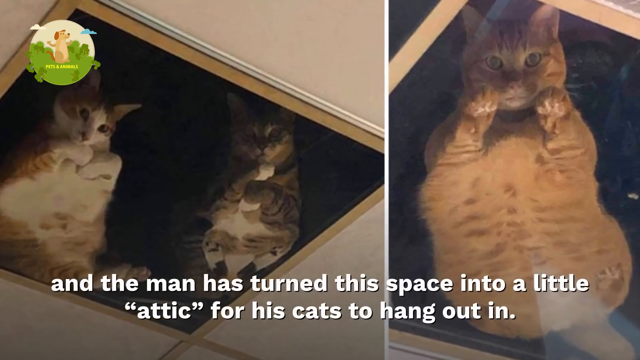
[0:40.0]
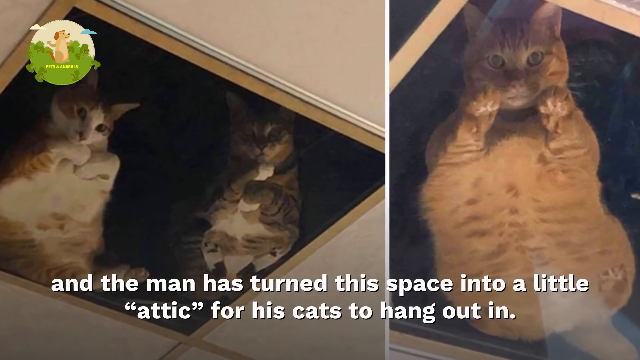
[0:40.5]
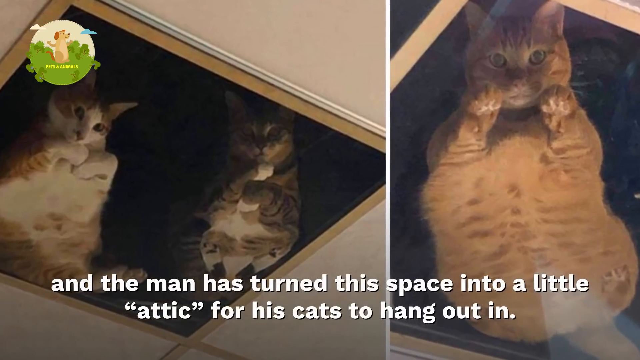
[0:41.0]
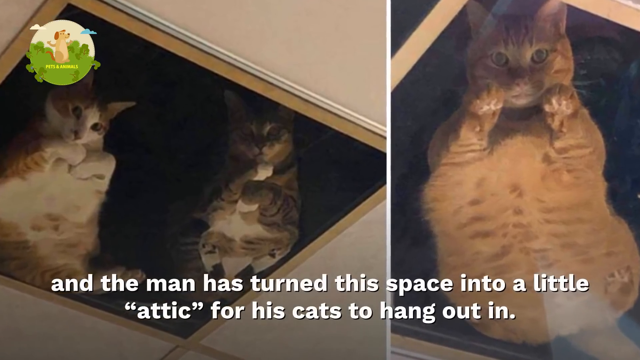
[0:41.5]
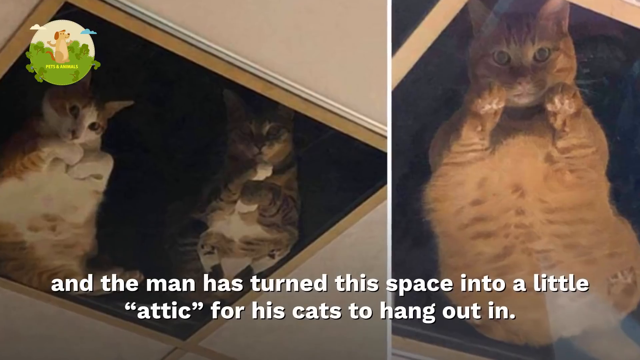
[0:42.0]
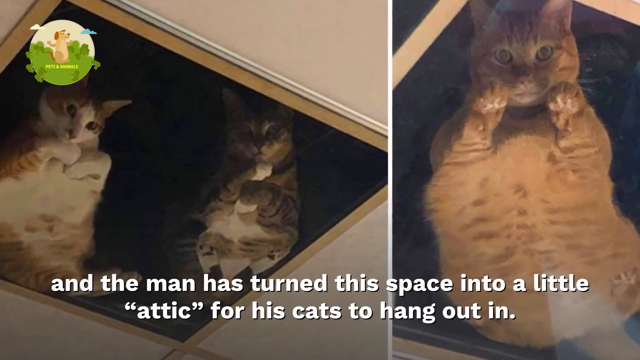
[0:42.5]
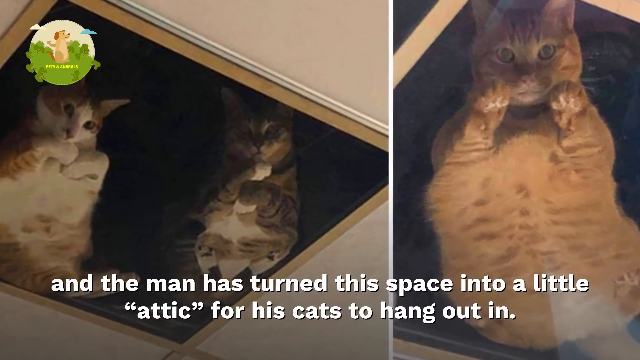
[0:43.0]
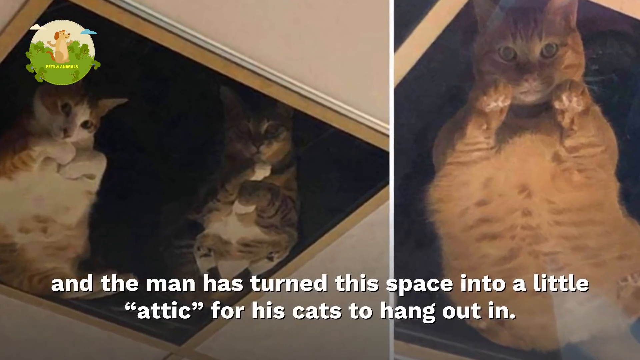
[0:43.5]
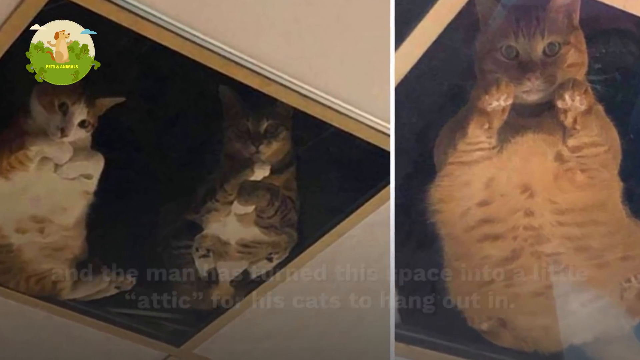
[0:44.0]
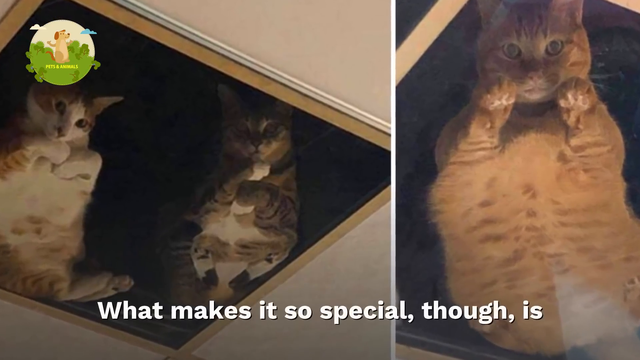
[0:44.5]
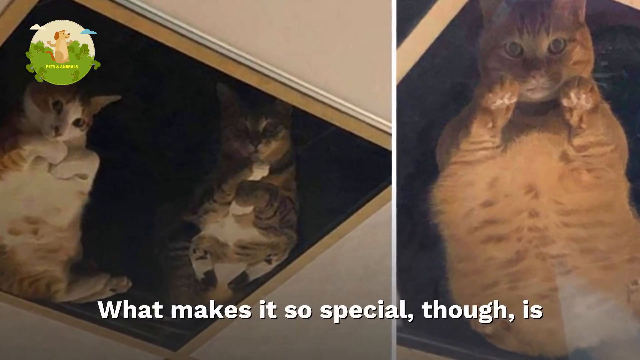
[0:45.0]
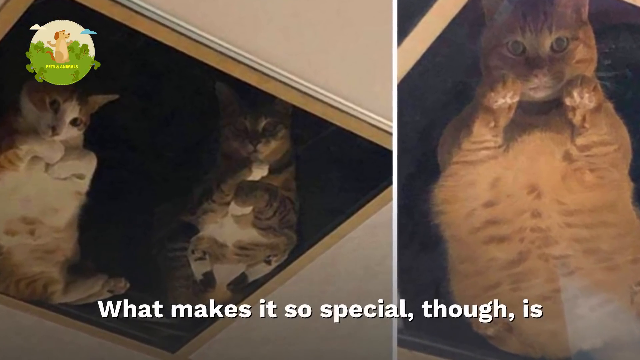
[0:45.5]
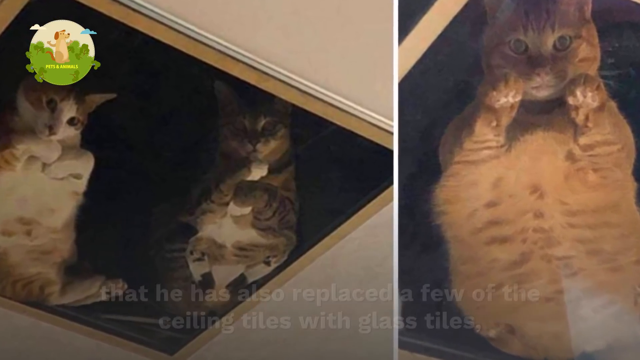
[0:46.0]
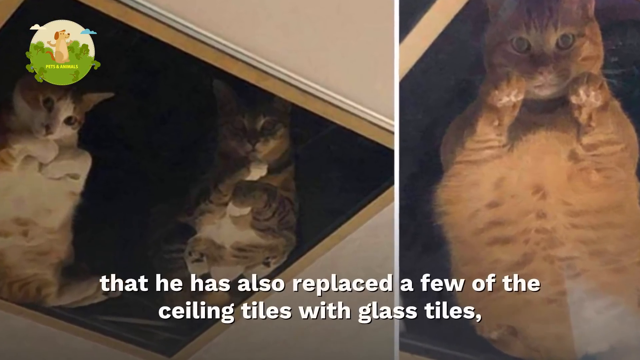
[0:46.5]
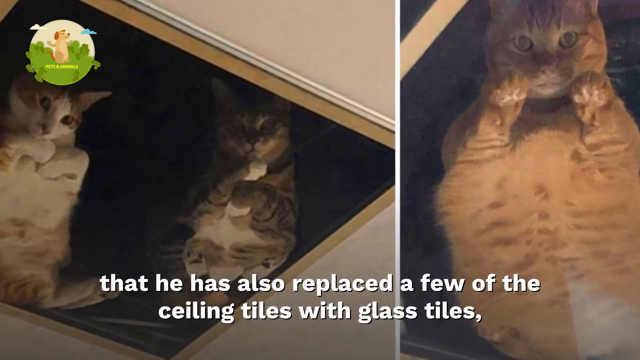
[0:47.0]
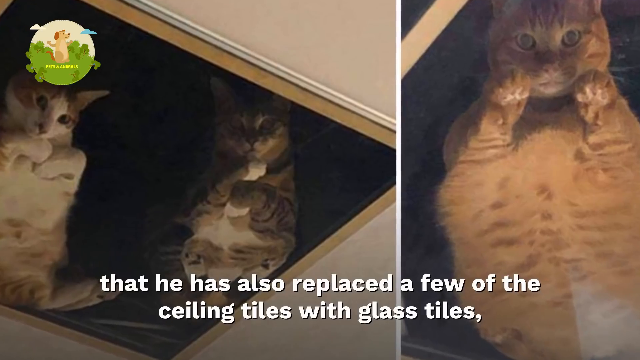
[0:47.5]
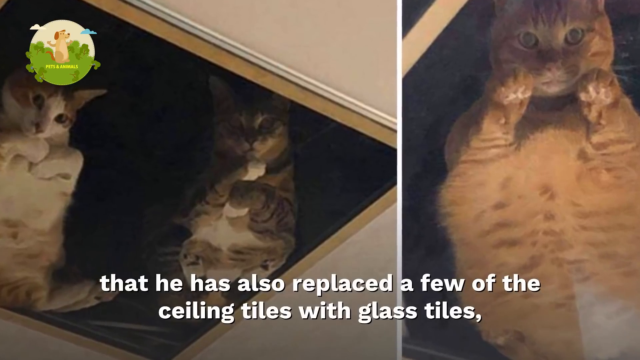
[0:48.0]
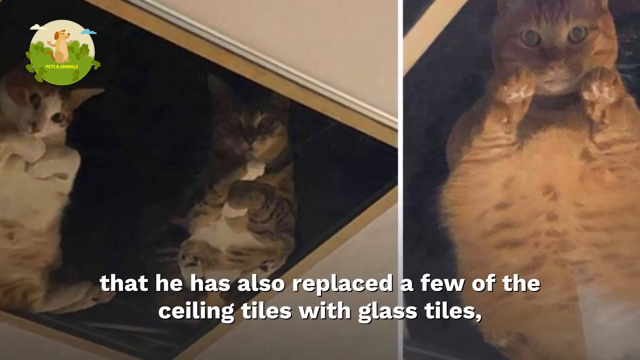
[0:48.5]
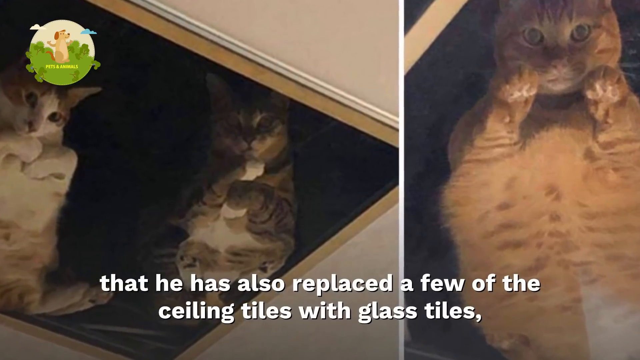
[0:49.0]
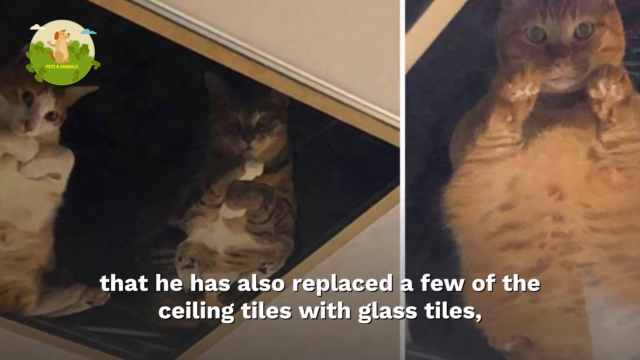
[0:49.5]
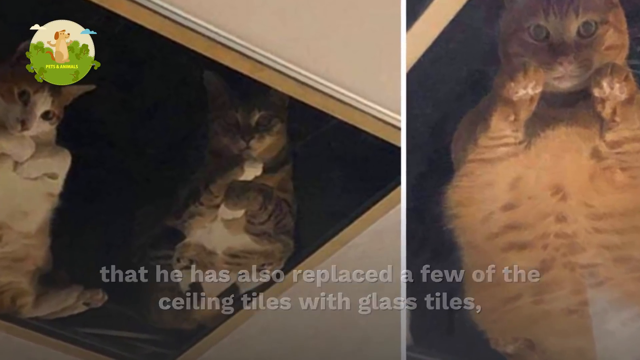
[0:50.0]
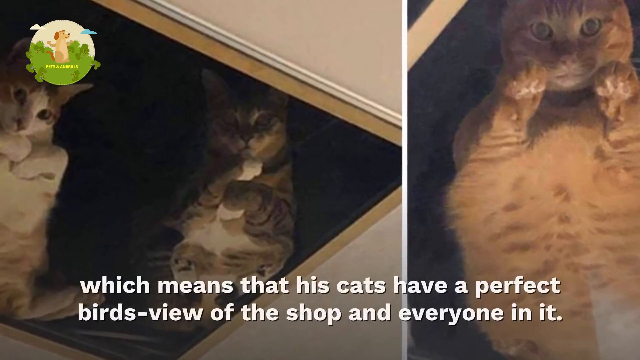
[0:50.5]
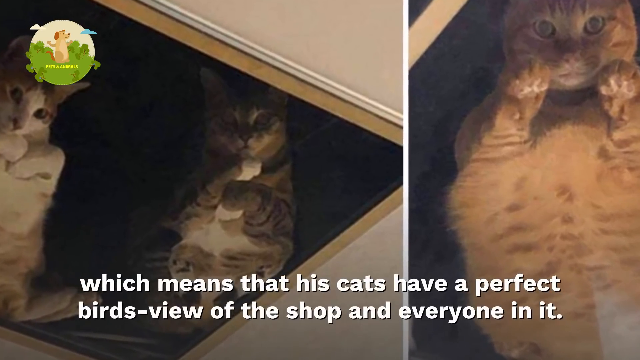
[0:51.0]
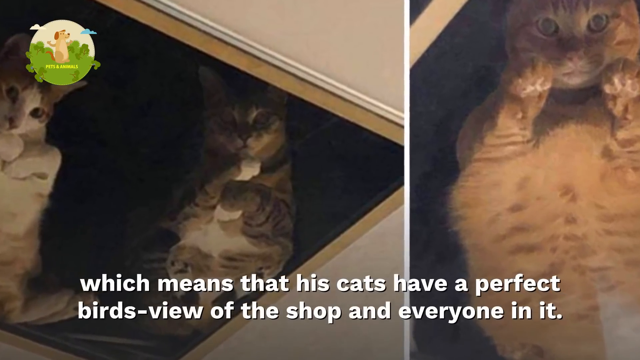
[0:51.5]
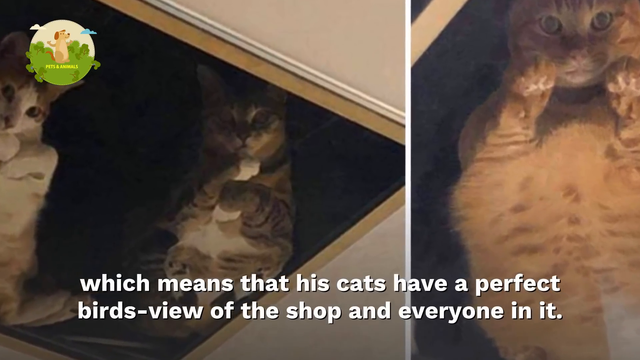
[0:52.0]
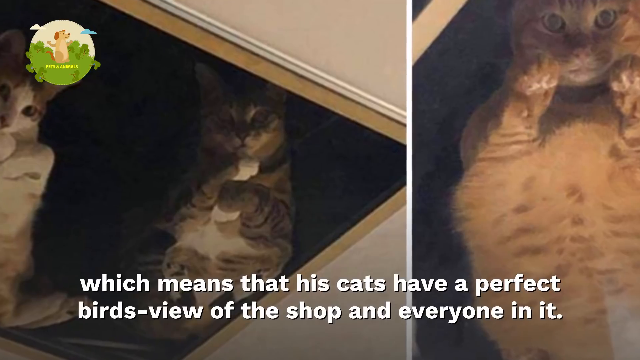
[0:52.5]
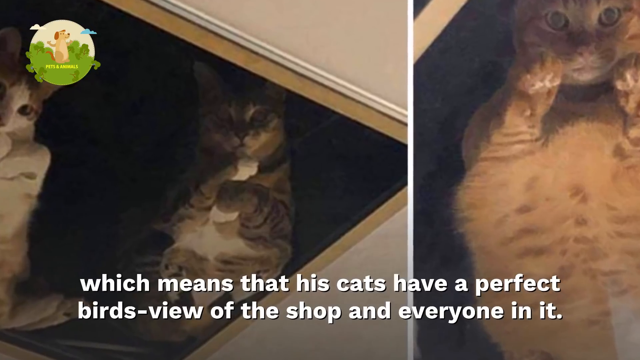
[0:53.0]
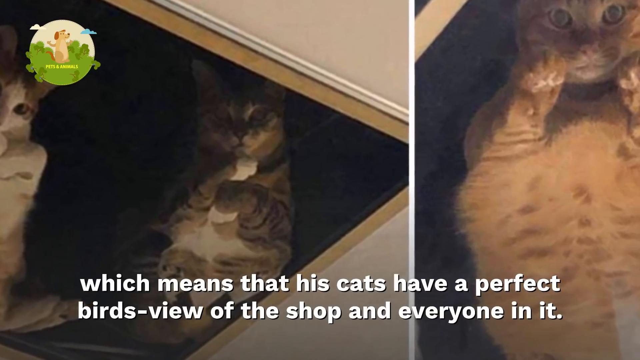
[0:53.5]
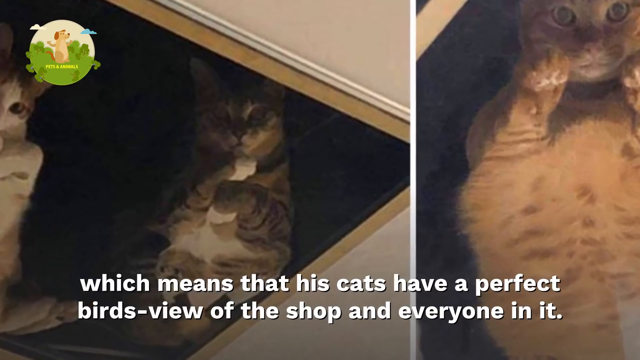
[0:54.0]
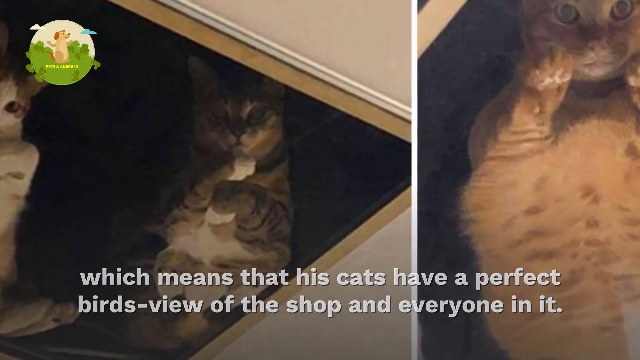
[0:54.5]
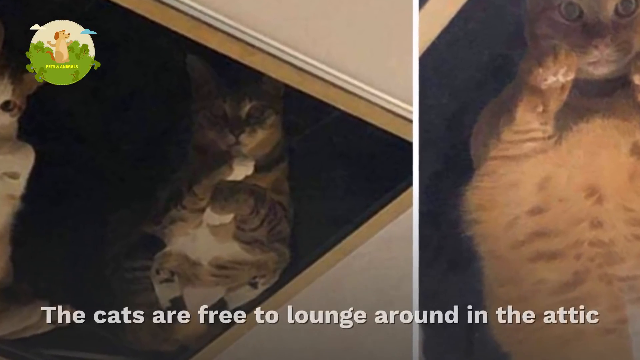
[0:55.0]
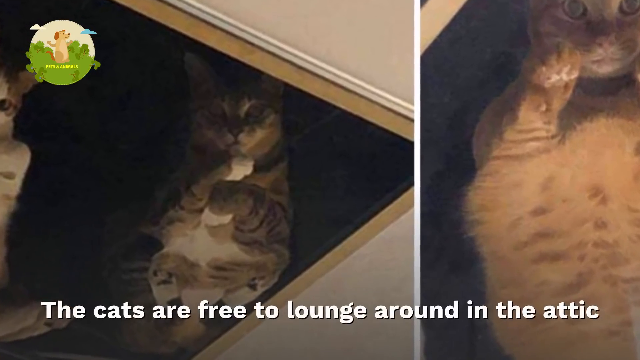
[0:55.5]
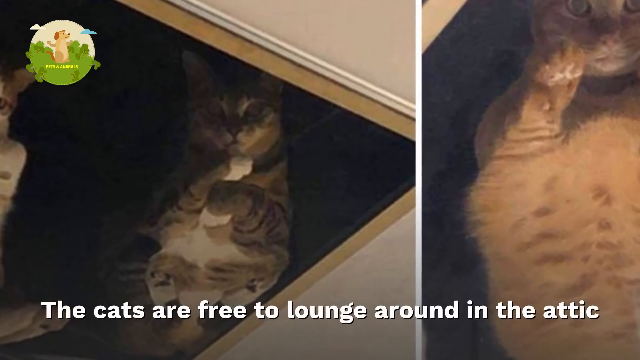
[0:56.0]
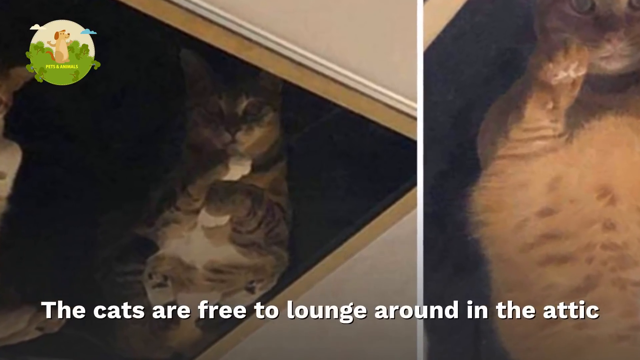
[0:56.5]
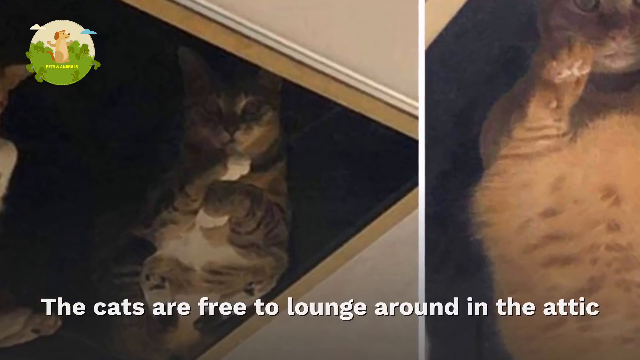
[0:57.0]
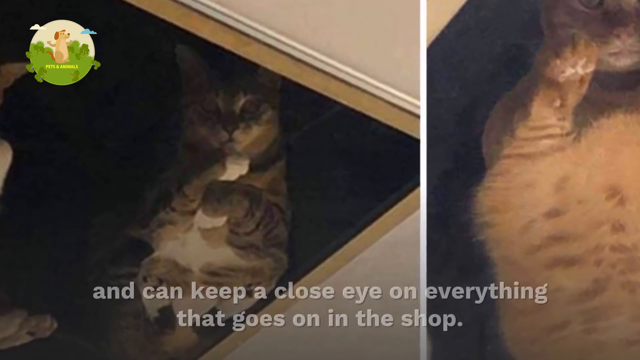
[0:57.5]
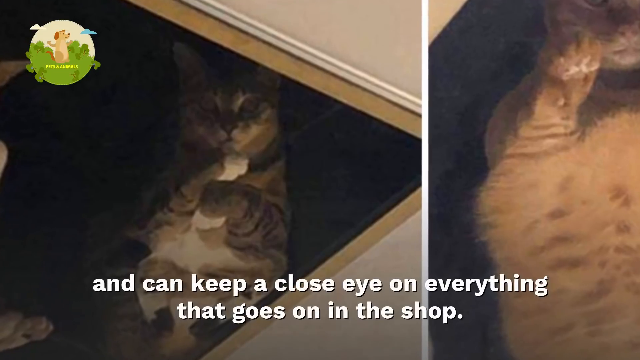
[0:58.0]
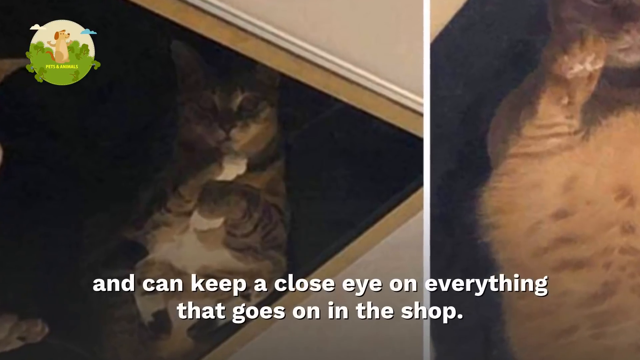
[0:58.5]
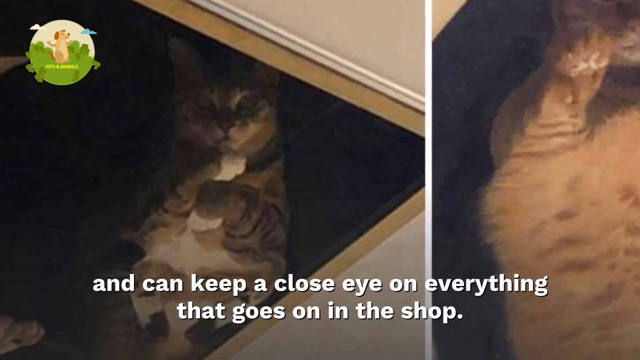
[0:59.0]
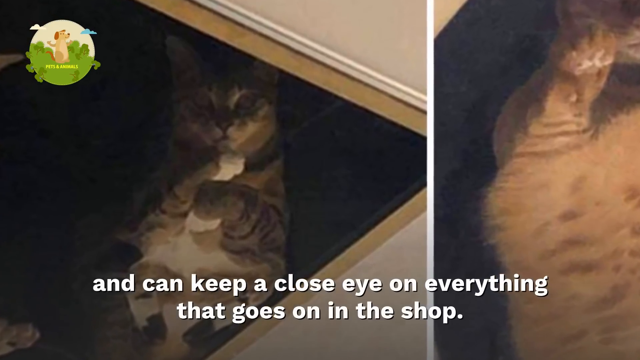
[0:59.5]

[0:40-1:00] Three cats are up in the ceiling tiles while the text reads "the man has turned this space into a little attic for his cats to hang out in." The cats look down, and the text continues: "what makes it so special though that he has also replaced a few of the ceiling tiles with glass tiles, which means that his cats have a perfect bird's eye view of the shop and everyone in it. The cats are free to lounge around in the attic and can keep a close eye on everything that goes on in the shop." When the cats lie down they look funny, since they look down at people and their fur is kind of squished together. They are seen from underneath with their paws curled, and some of their white bellies look kind of big and spread out, making them look fatter than they are.